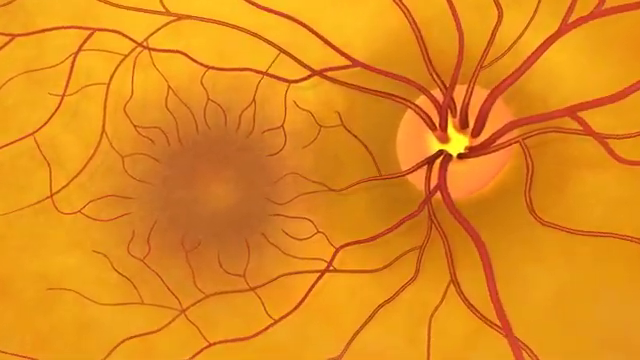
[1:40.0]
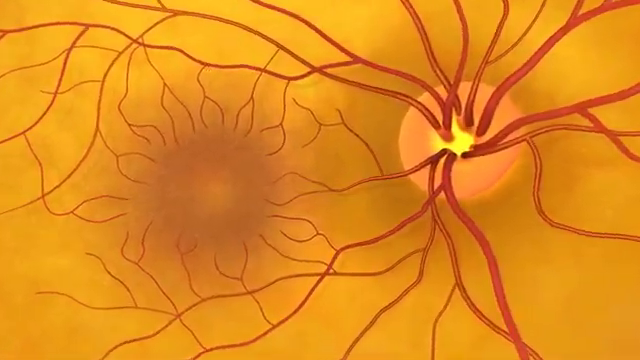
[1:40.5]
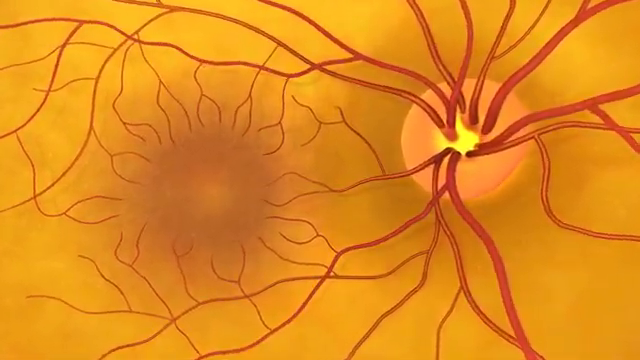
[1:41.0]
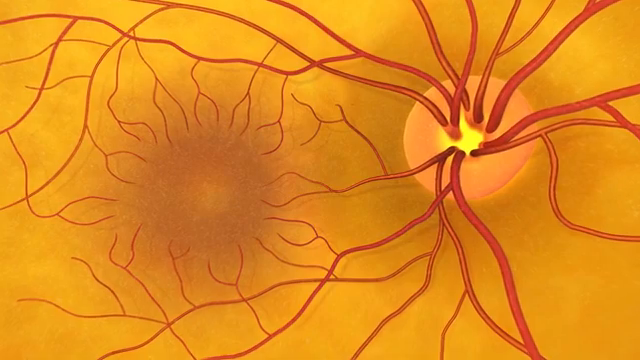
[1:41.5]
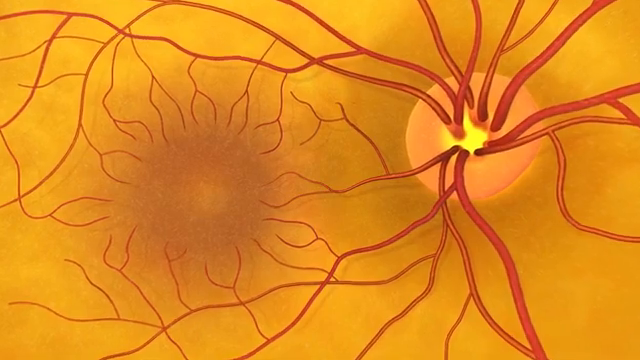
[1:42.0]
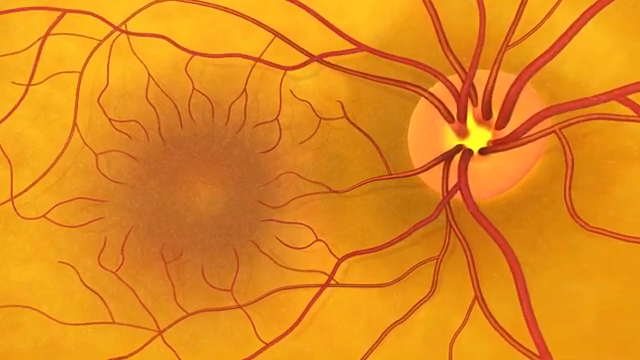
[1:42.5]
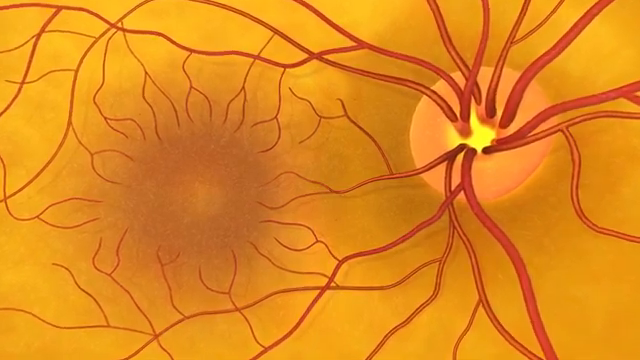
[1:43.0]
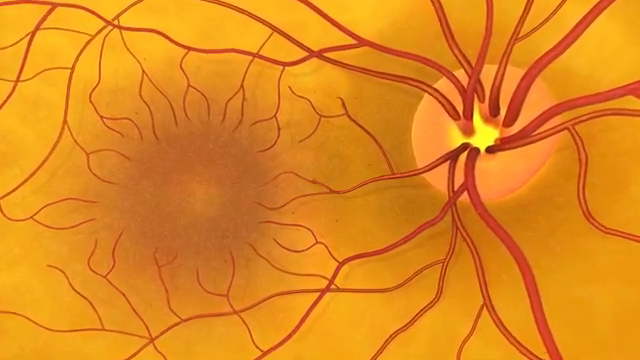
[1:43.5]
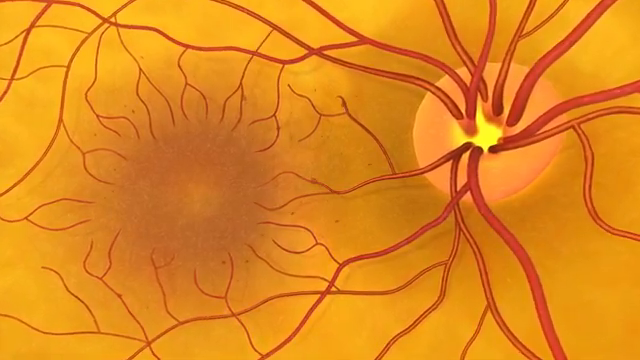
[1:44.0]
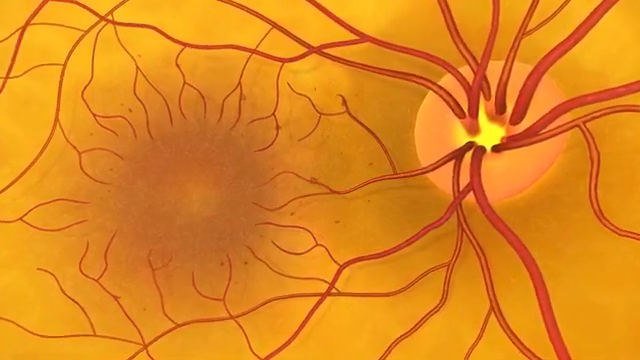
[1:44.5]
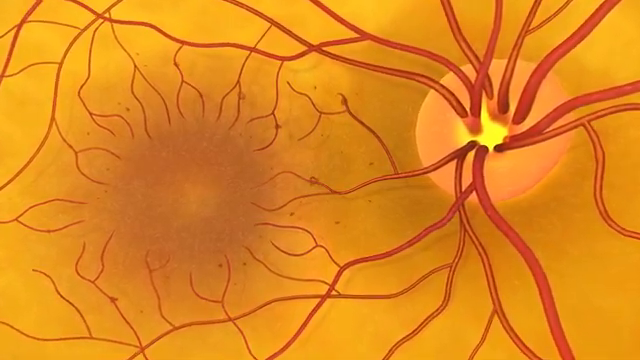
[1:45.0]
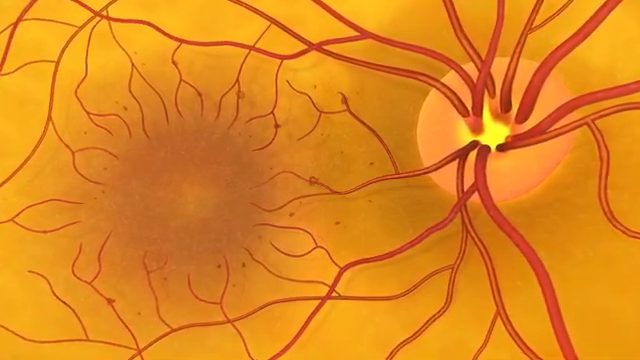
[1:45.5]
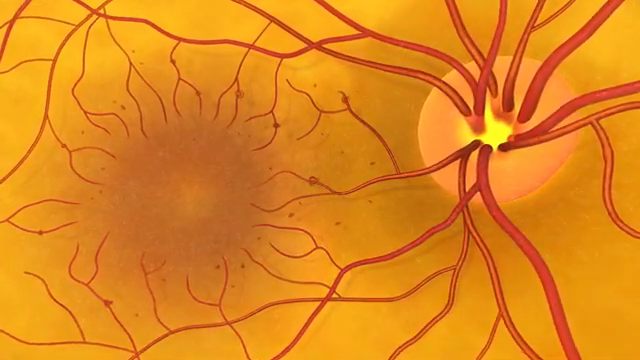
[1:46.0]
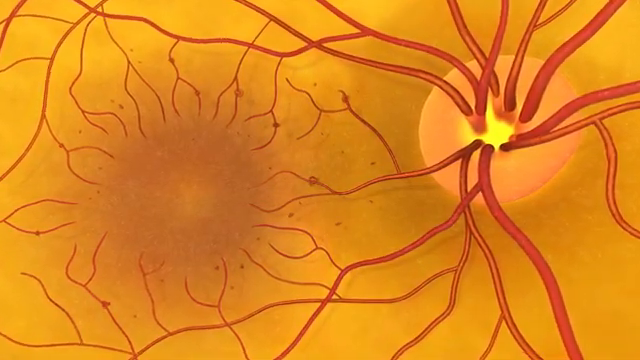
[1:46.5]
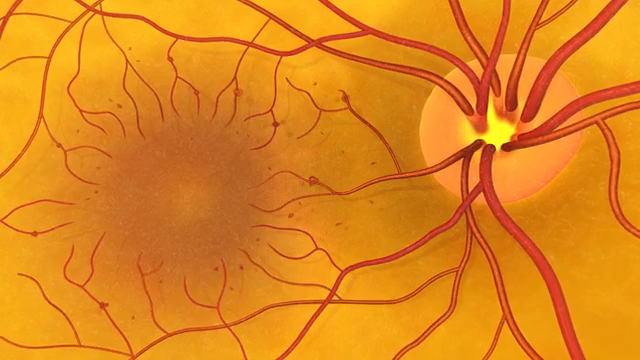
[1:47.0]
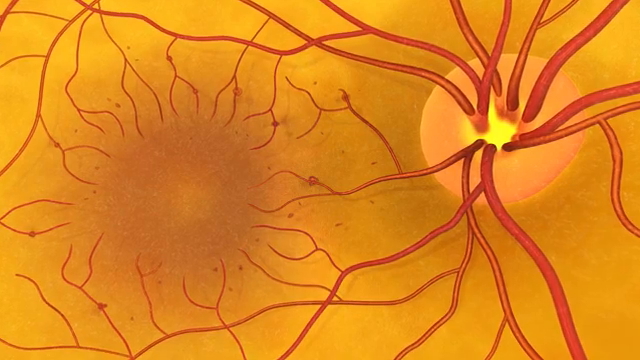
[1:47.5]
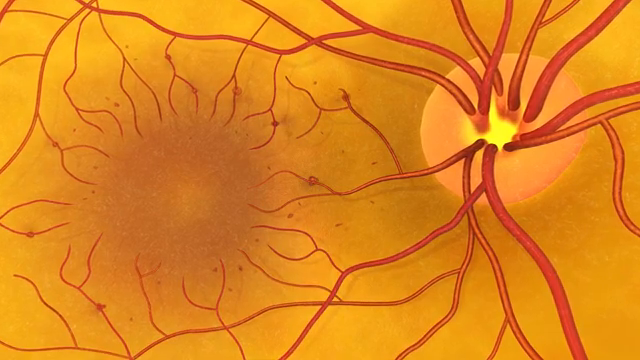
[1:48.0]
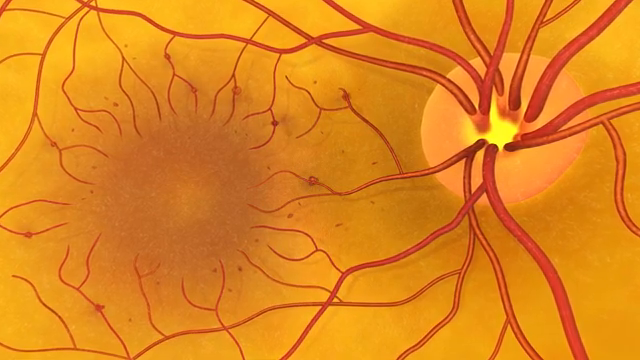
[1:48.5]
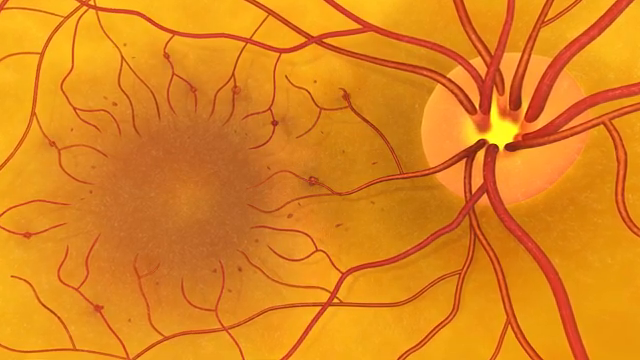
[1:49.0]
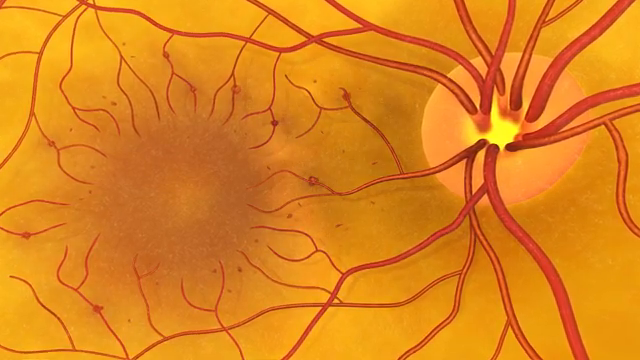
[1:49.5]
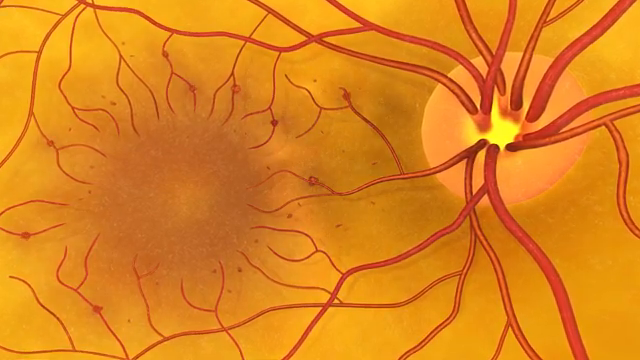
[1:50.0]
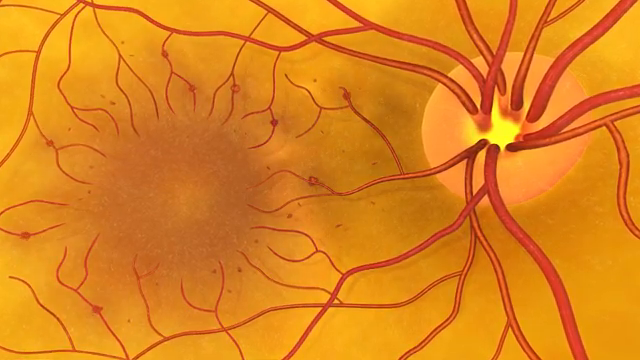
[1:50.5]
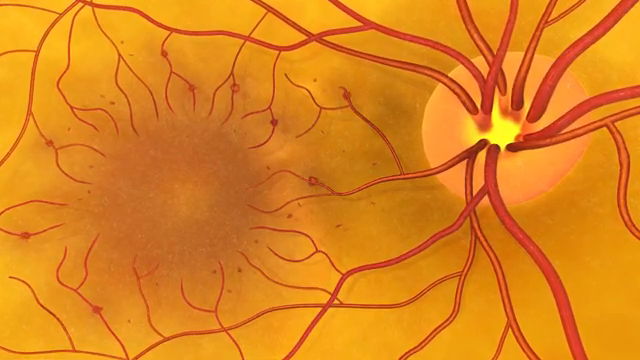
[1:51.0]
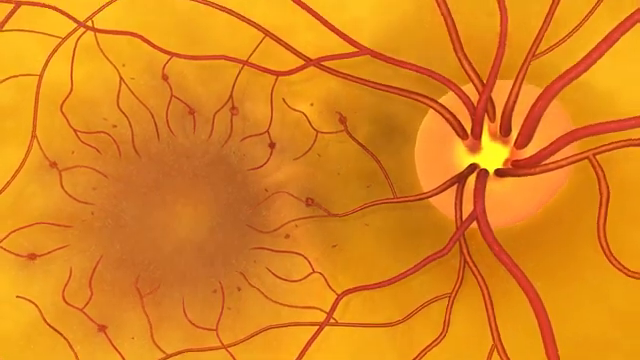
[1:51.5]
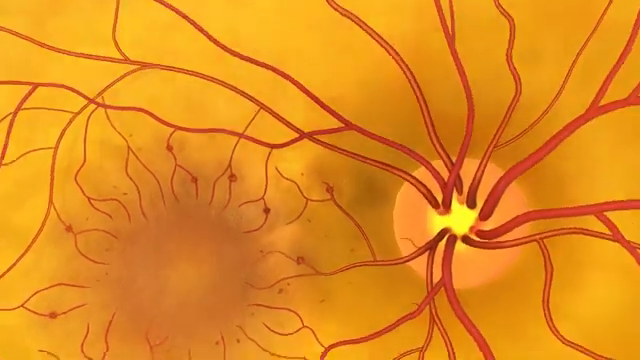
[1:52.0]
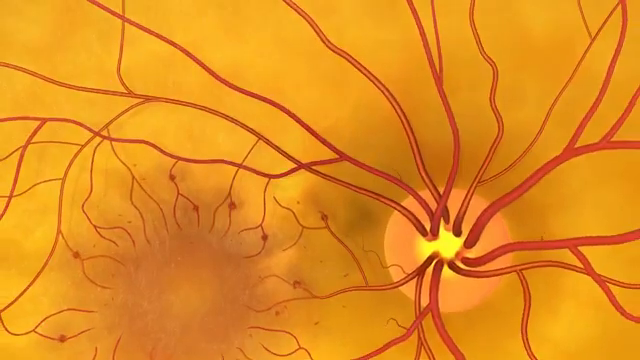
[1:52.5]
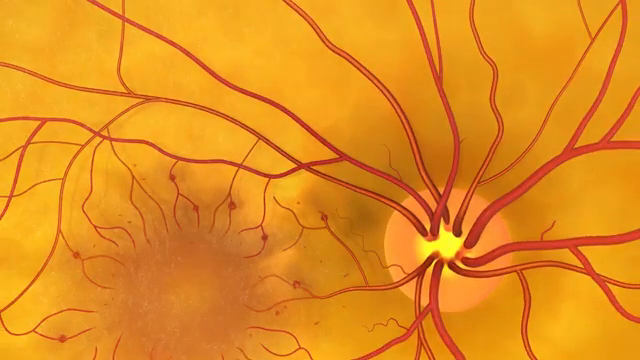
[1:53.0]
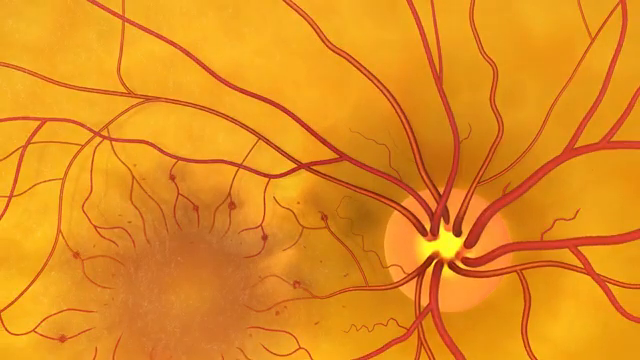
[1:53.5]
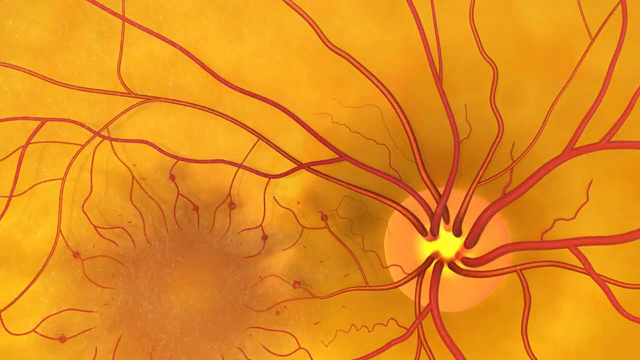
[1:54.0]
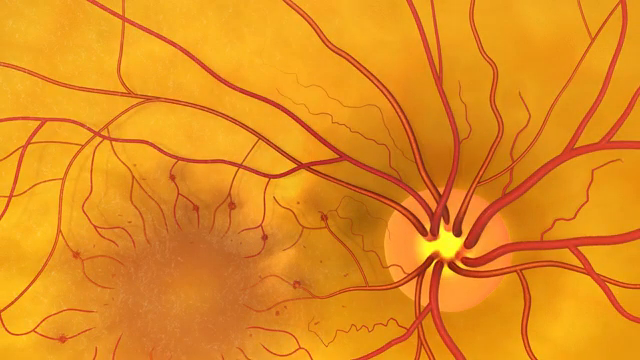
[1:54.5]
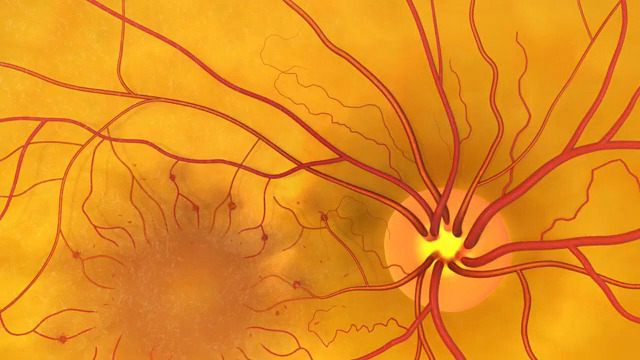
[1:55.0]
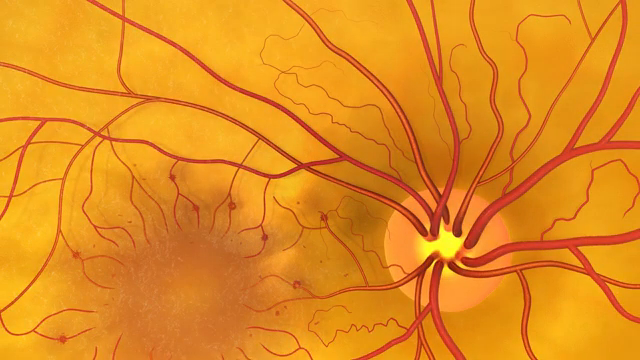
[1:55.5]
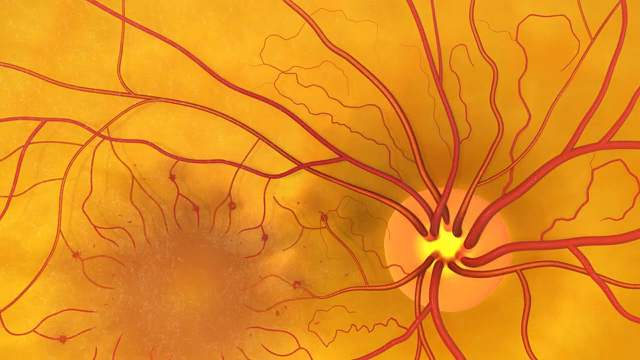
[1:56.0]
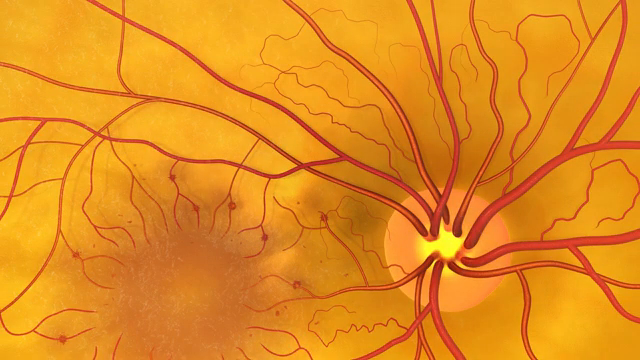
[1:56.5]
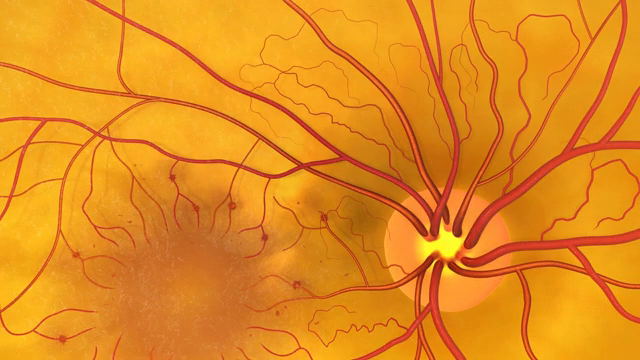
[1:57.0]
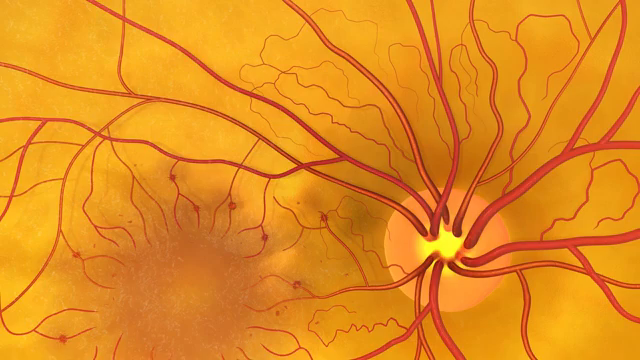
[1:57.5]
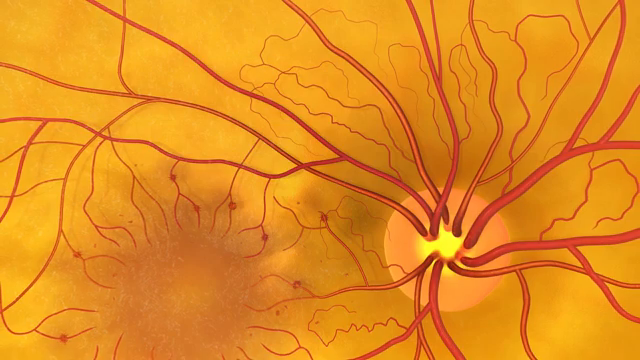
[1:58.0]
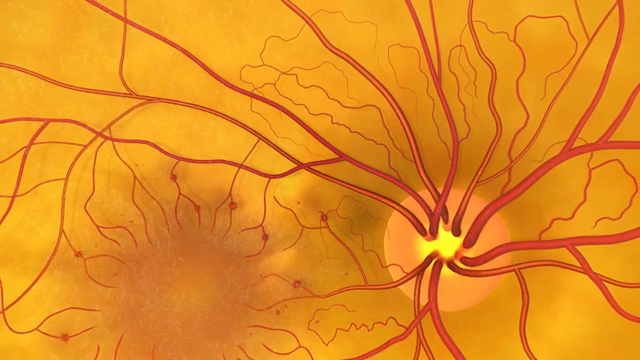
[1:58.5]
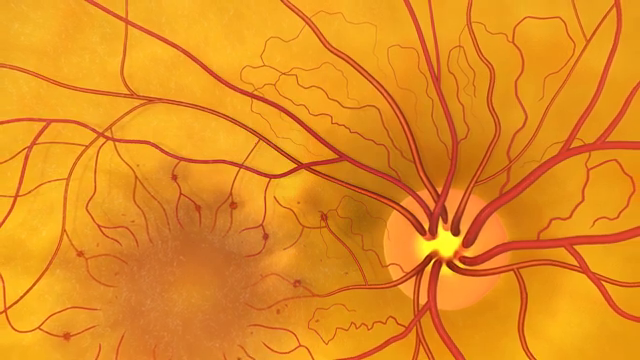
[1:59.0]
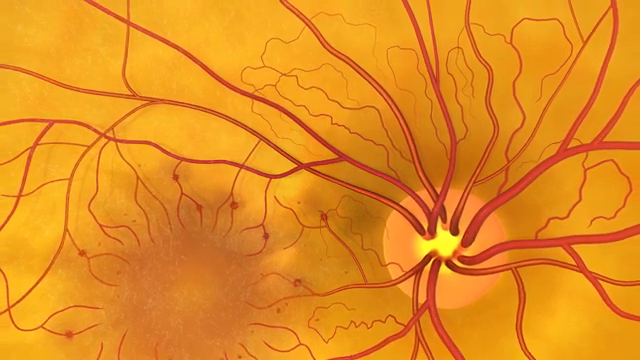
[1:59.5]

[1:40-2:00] Many blood vessels go in different directions, entering and exiting, forming a sort of conic shape. Smaller arteries grow and branch off the larger arteries, spreading in different directions into various parts of the iris of the eye.